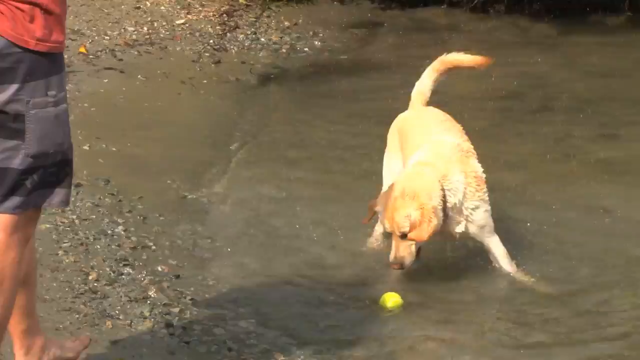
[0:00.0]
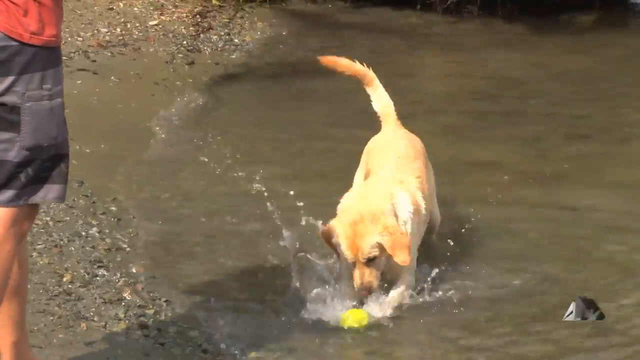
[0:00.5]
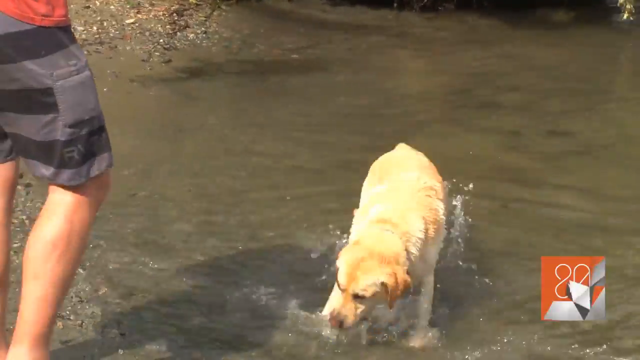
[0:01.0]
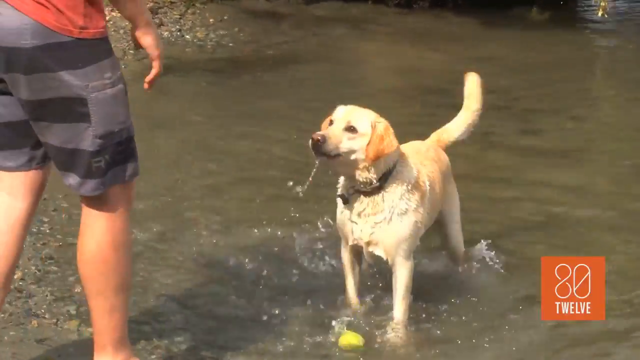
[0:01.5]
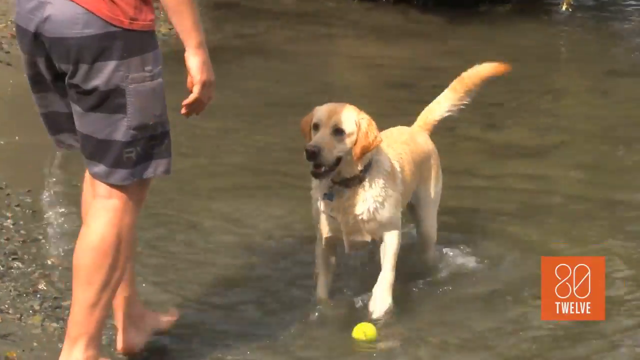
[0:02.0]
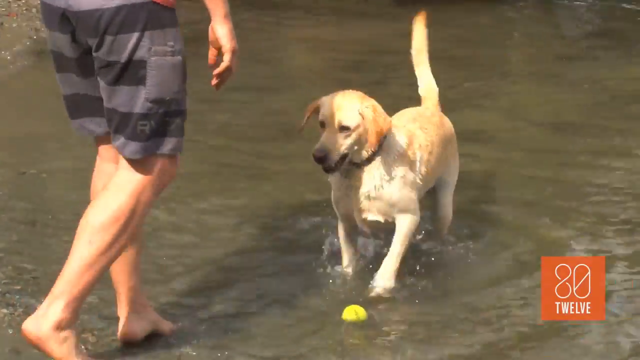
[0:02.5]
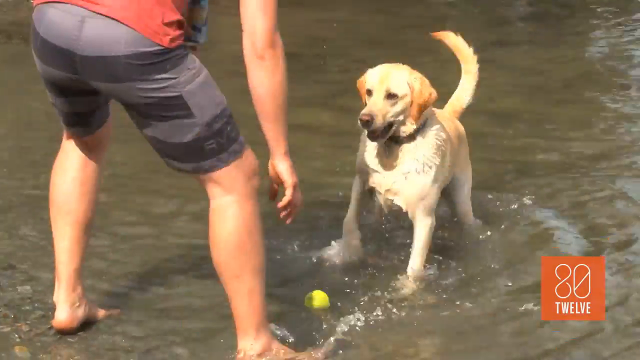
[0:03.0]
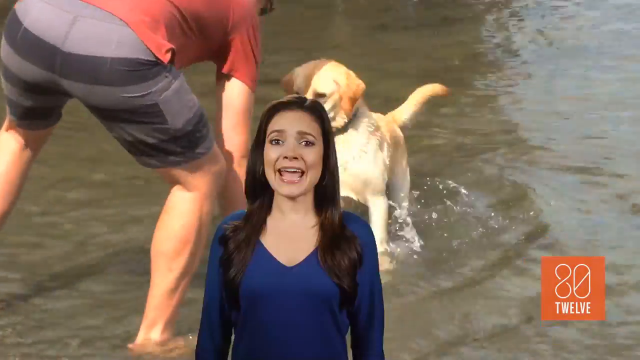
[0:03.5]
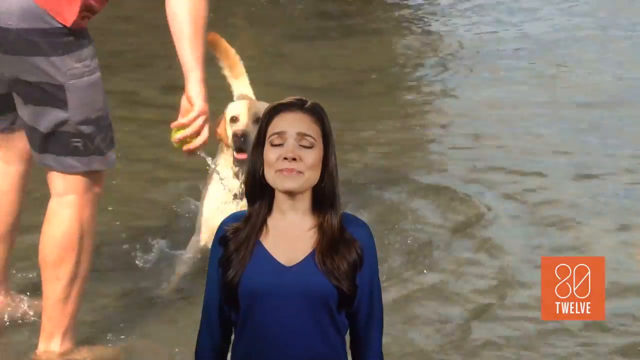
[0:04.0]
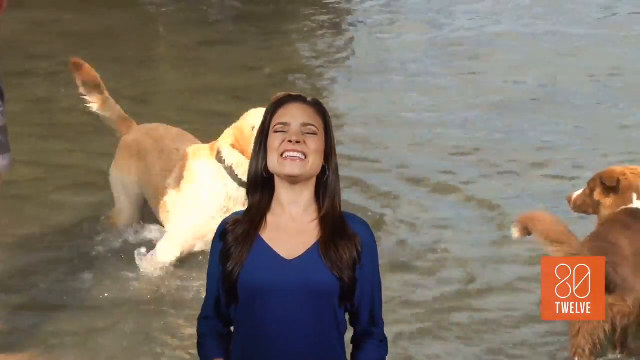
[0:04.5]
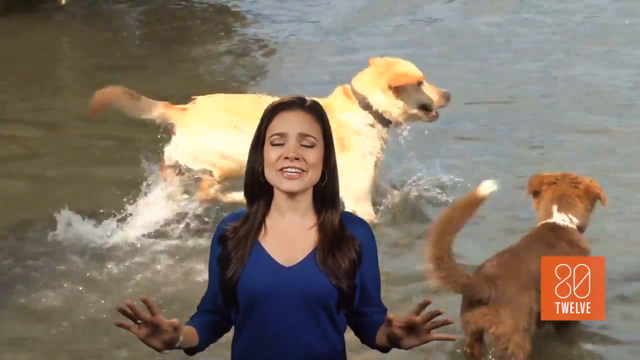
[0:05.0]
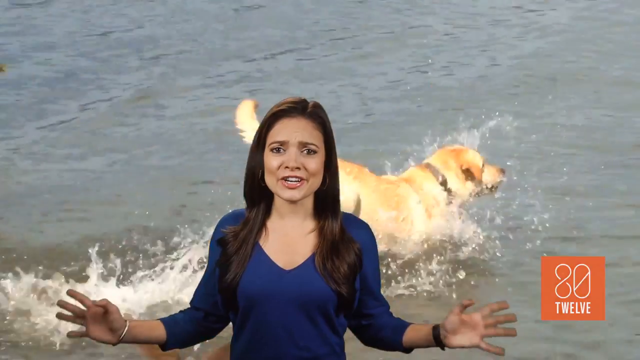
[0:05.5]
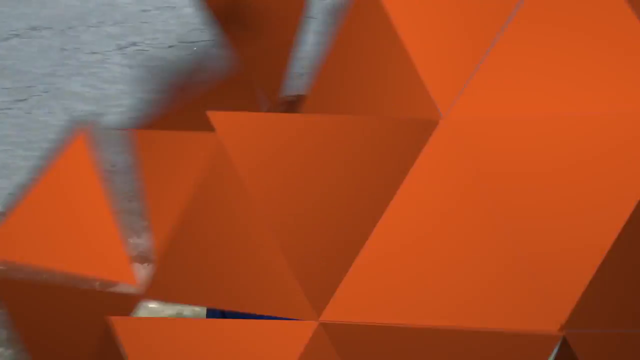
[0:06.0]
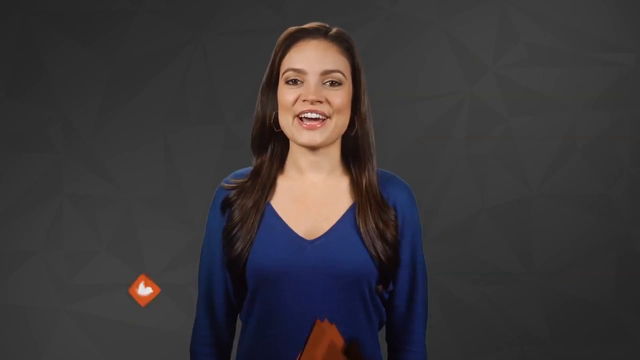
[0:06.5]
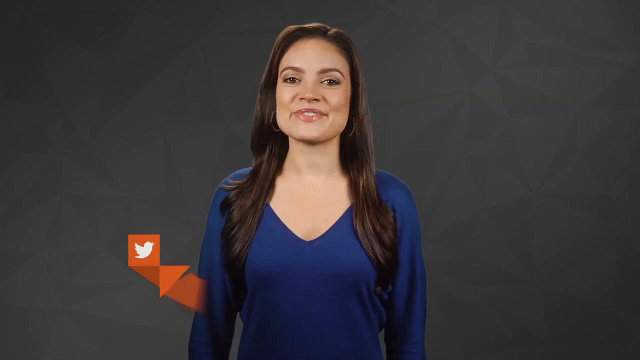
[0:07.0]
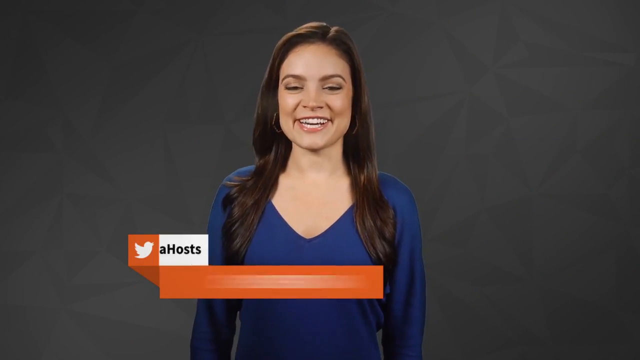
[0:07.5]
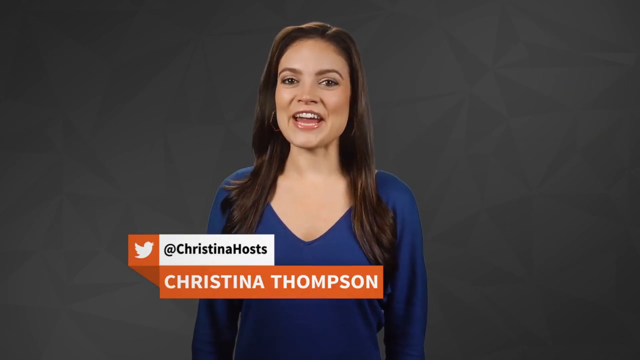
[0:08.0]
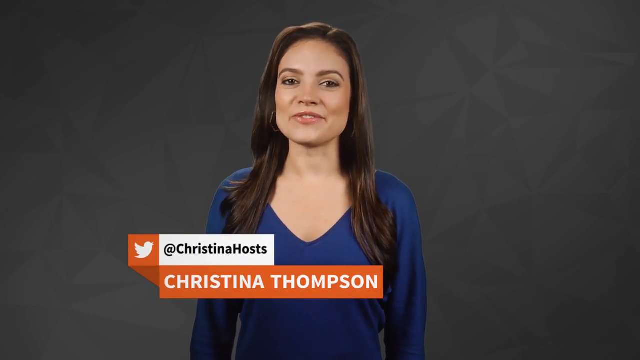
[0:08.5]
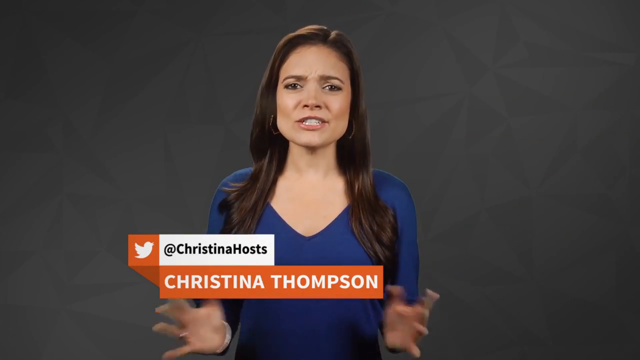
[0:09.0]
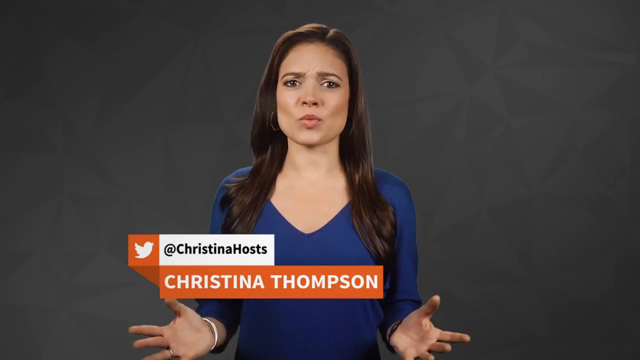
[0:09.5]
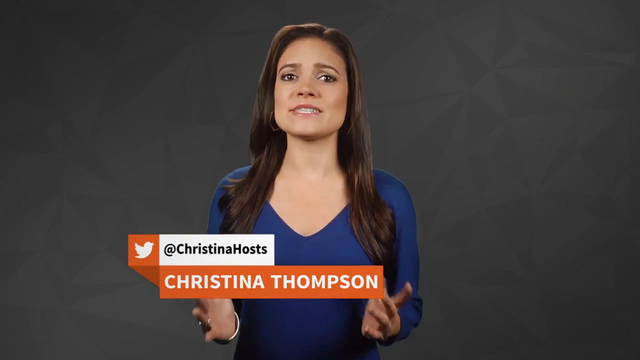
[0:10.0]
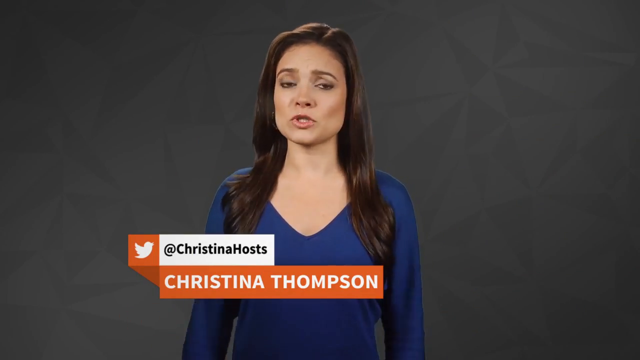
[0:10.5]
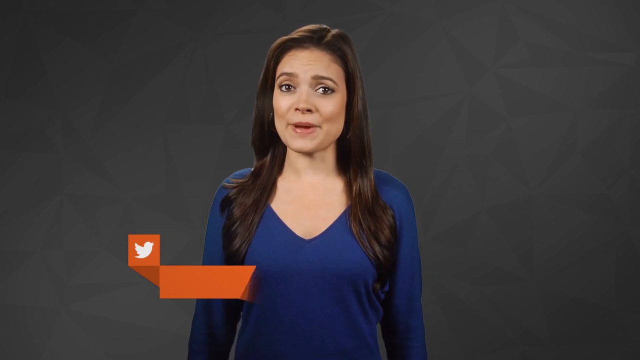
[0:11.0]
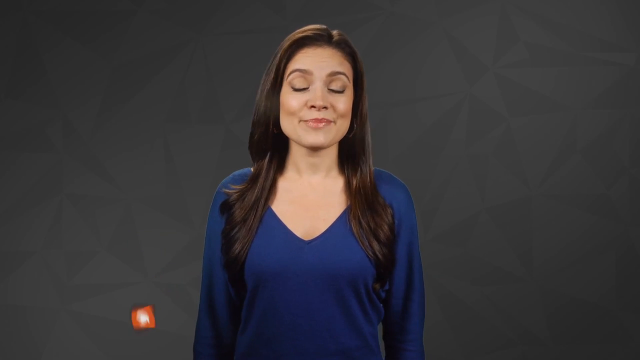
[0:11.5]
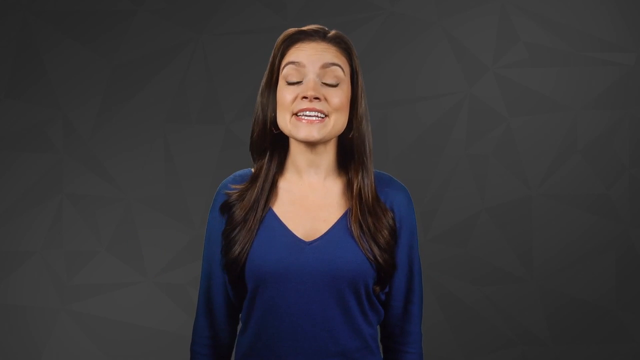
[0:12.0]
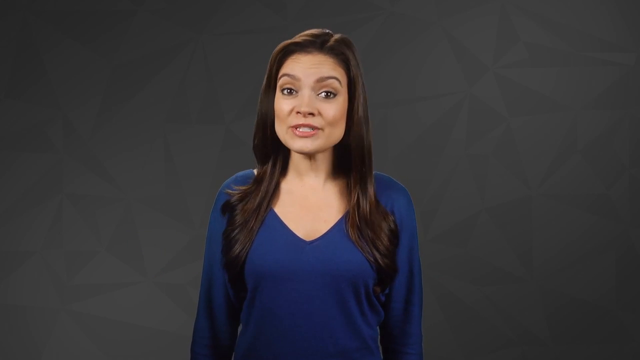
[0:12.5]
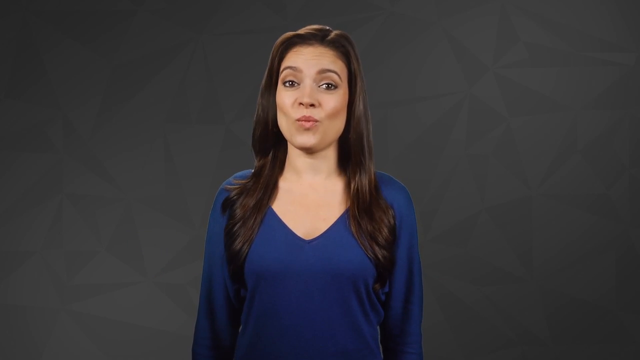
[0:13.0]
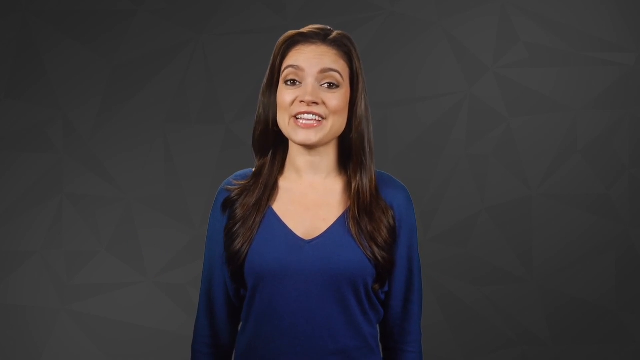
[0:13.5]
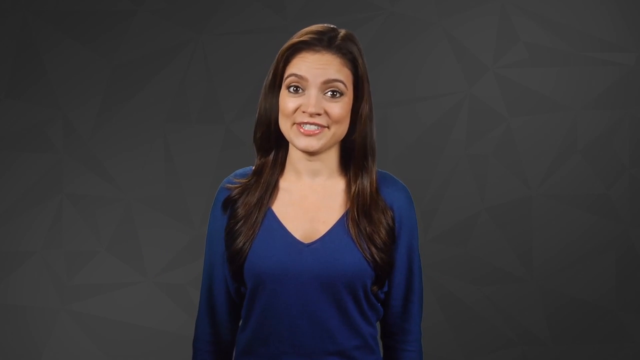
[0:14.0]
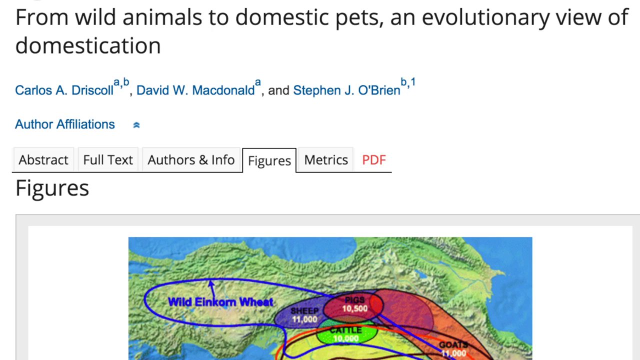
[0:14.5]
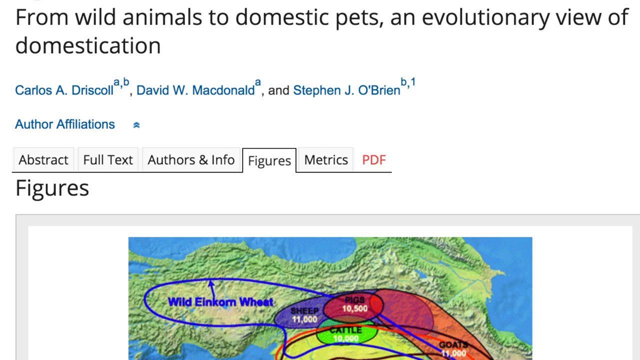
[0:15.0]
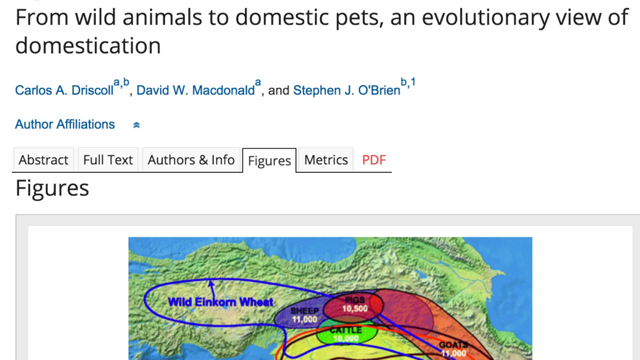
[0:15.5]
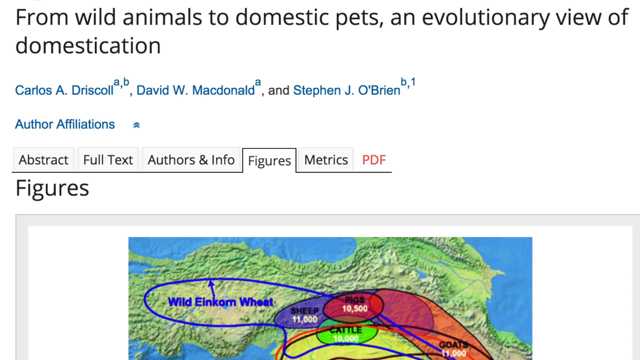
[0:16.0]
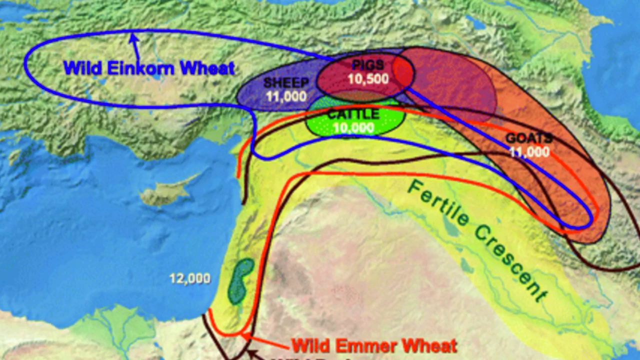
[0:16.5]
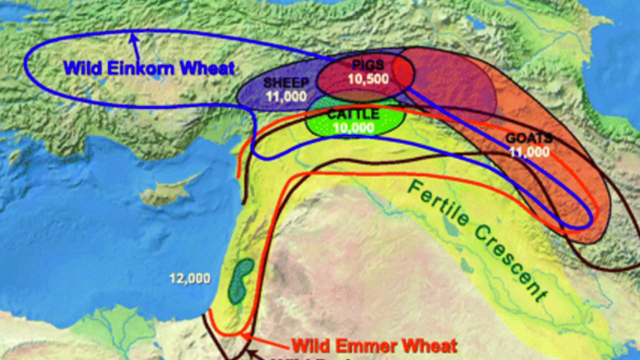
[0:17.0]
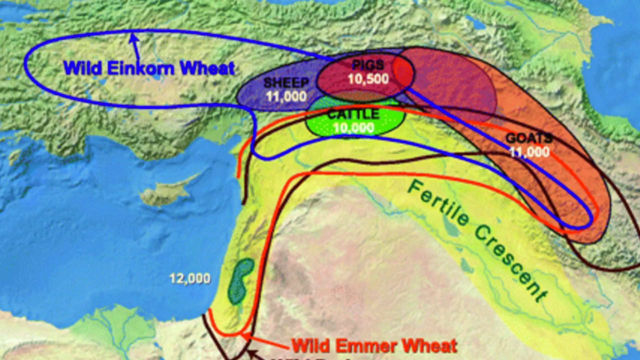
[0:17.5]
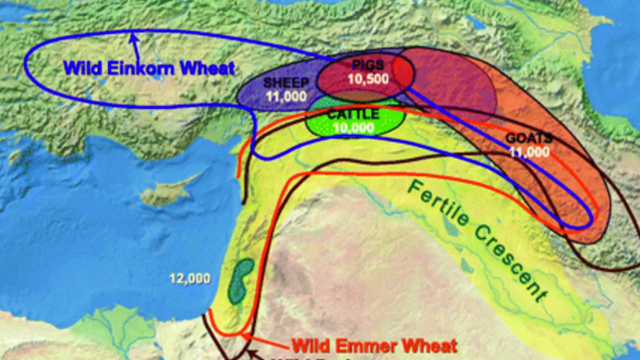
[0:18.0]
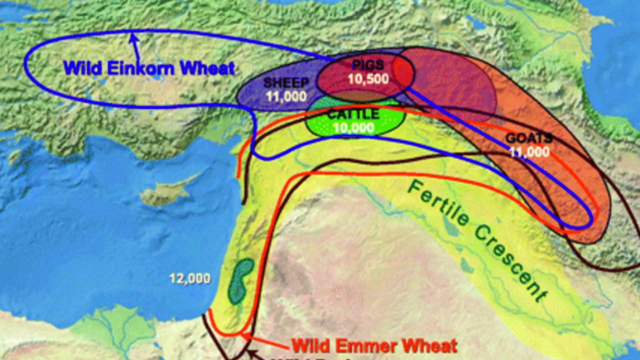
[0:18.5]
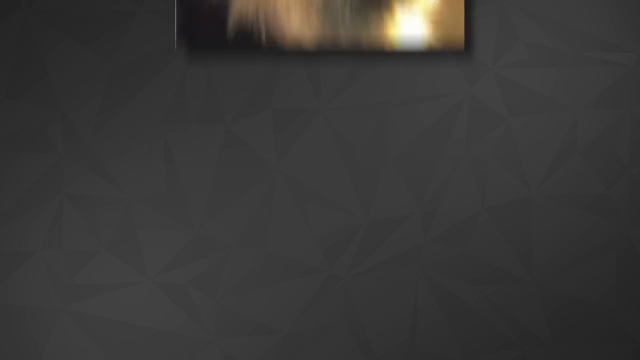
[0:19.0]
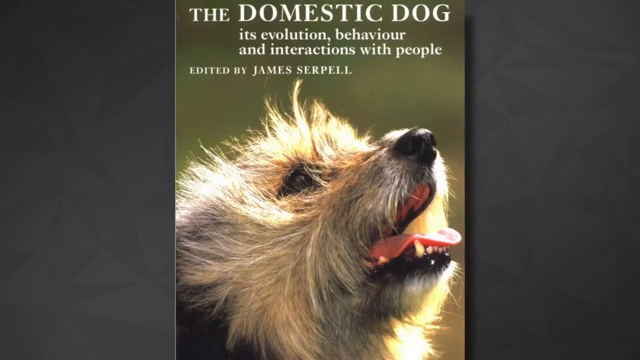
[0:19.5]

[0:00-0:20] The video appears to be a clip from a program, with the program's logo in the bottom right corner: an orange square with the text "80Twelve" on it. It shows a lake with a dog standing in the water; the water is very low, covering only the dog's paws. The dog, which looks like a Labrador, plays with a tennis ball and jumps in the water very excitedly. It is playing with another dog that looks like a puppy. A man takes the tennis ball in his hands, and then the Labrador jumps in the water. Meanwhile, a cutout of a girl talking to the camera appears, overlaid on the footage. The video then changes to a black background with the same girl talking to the camera. Beneath her is text with the Twitter logo showing her handle, "@christinahosts", and underneath it her name, "Christina Thompson". The handle and name disappear while the girl keeps talking. Next comes what looks like a screenshot from a website, titled "from wild animals to domestic pets: an evolutionary view of domestication", with the authors of the article listed underneath. Then there is a zoom on a map.